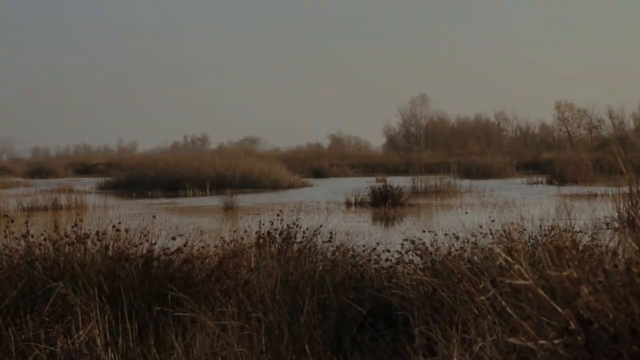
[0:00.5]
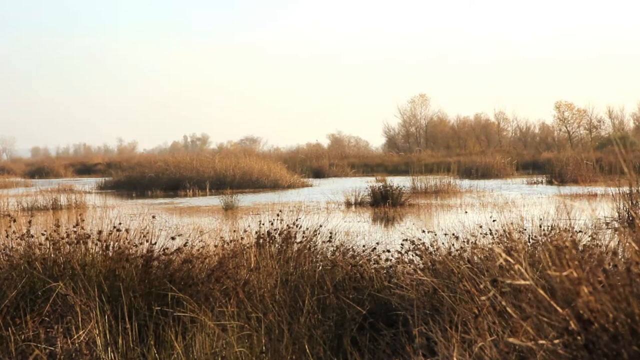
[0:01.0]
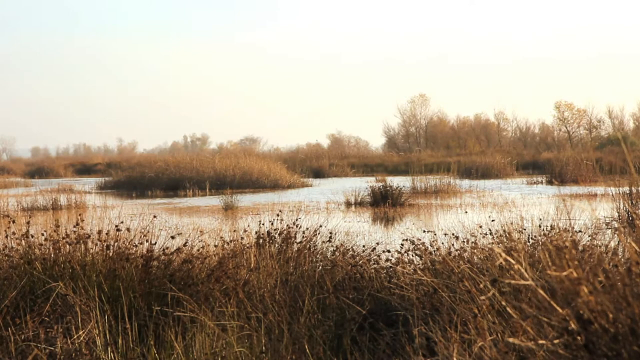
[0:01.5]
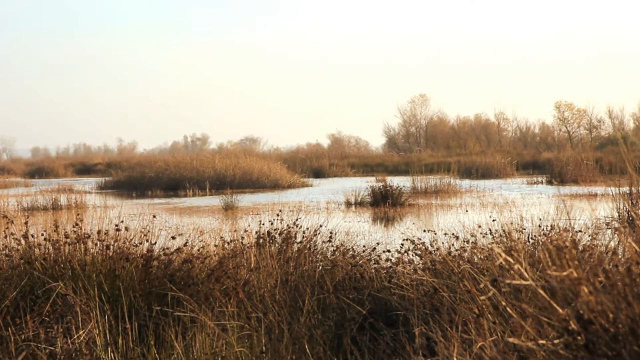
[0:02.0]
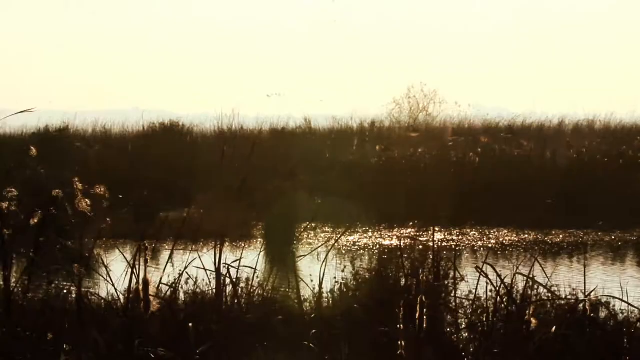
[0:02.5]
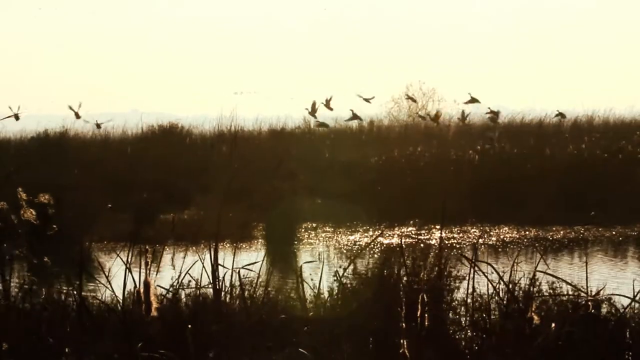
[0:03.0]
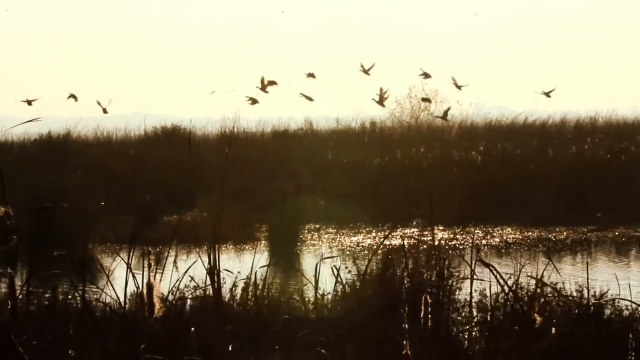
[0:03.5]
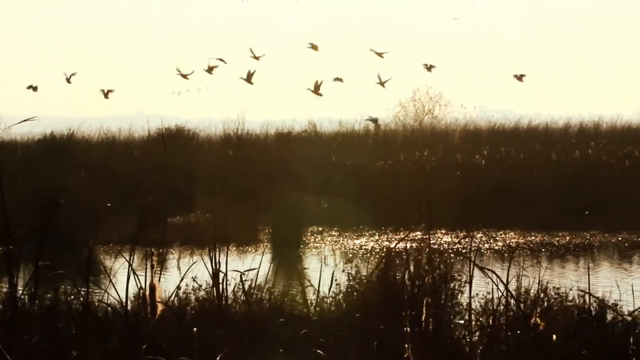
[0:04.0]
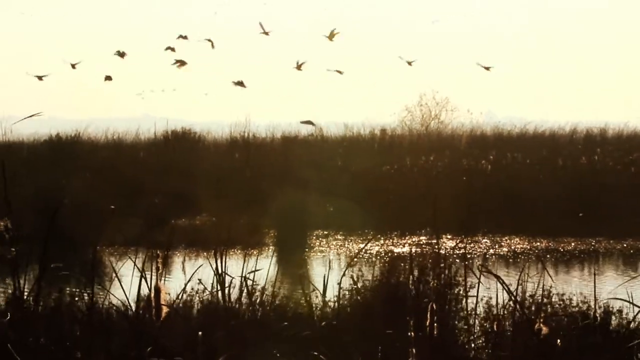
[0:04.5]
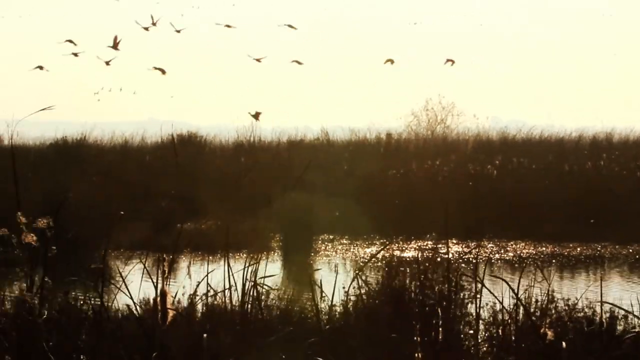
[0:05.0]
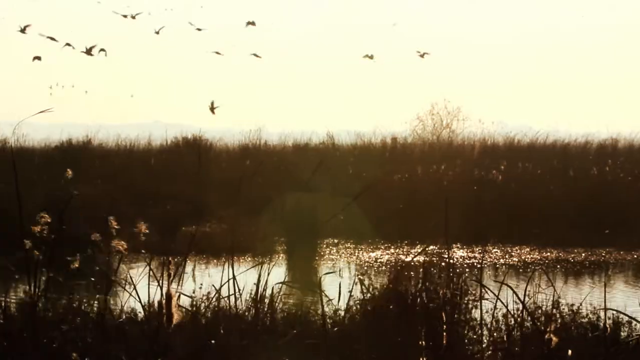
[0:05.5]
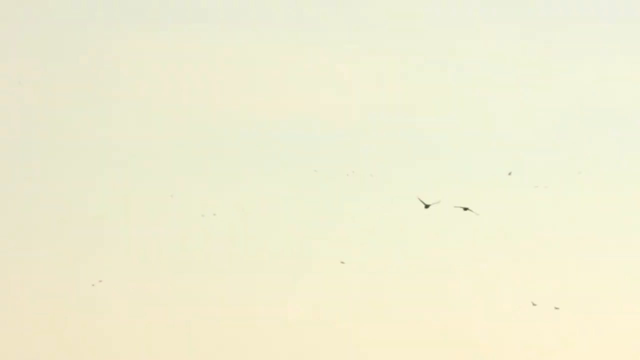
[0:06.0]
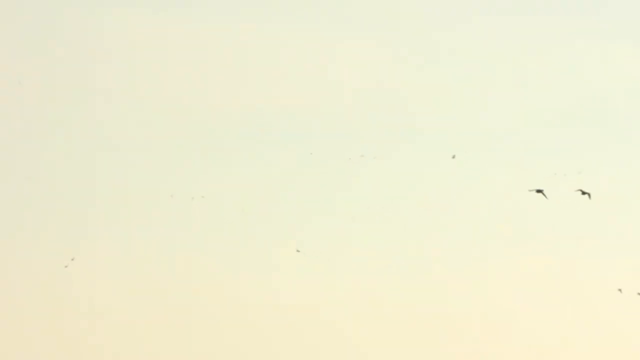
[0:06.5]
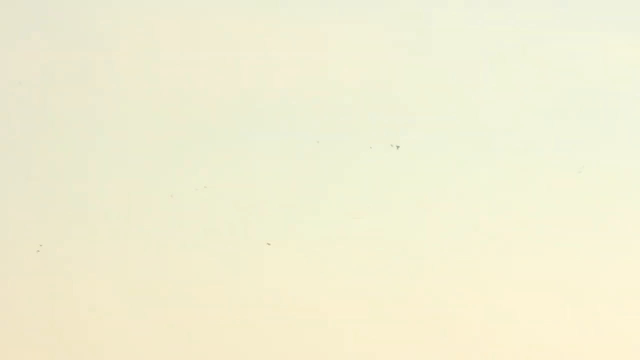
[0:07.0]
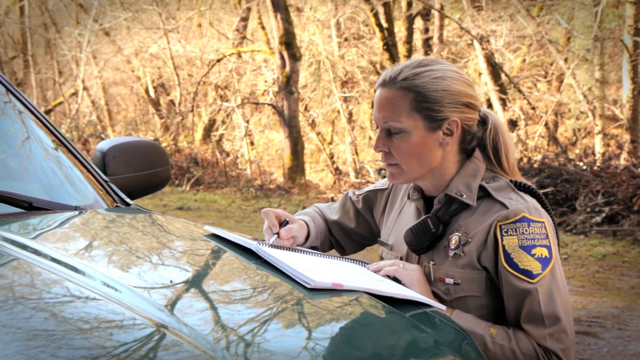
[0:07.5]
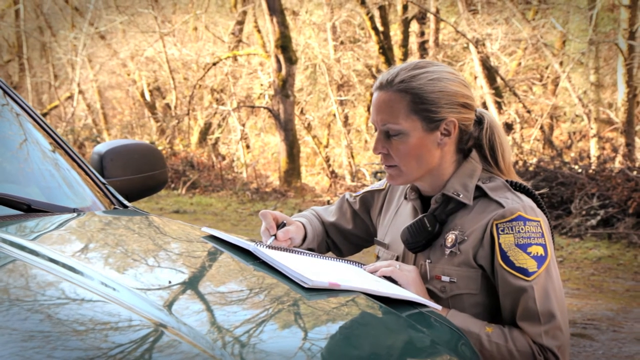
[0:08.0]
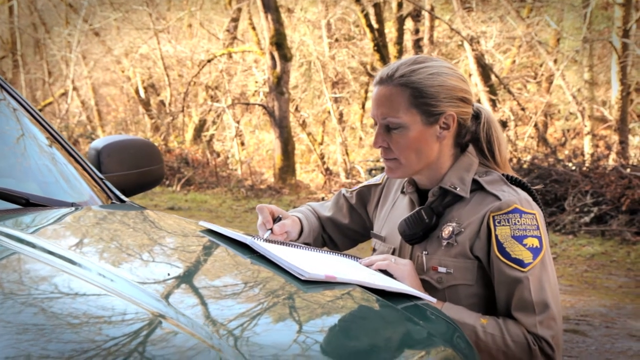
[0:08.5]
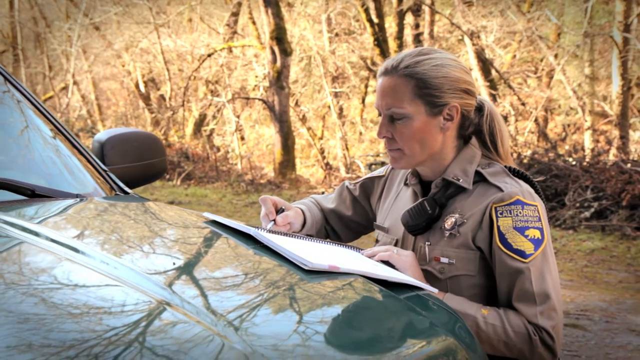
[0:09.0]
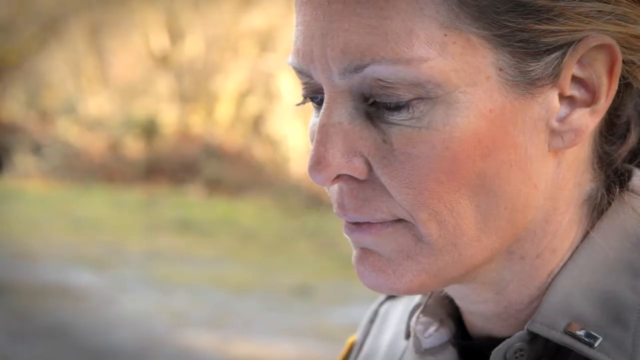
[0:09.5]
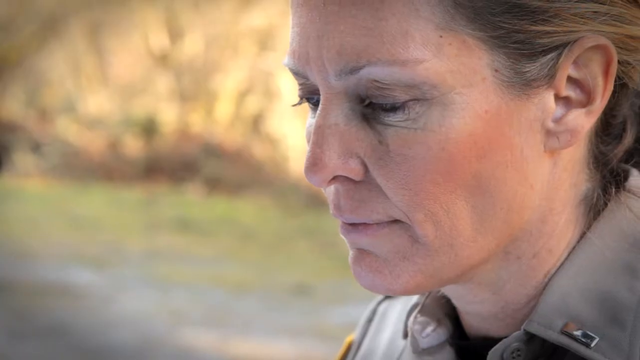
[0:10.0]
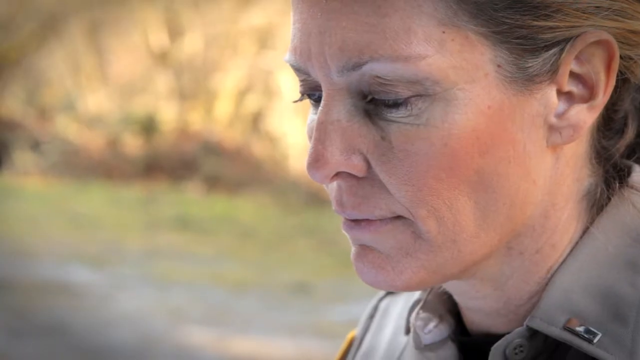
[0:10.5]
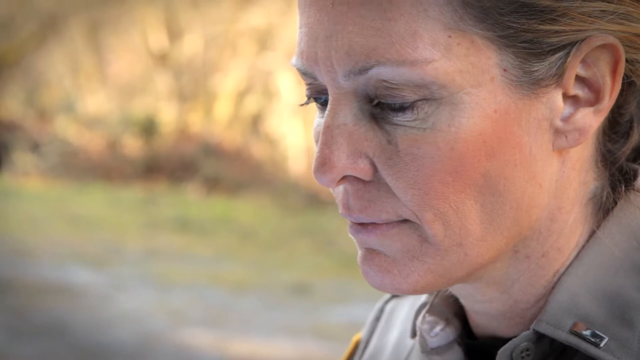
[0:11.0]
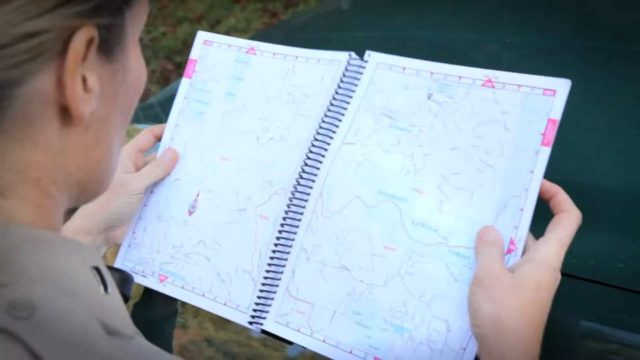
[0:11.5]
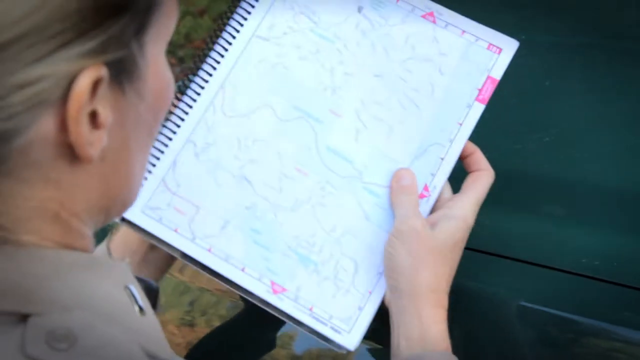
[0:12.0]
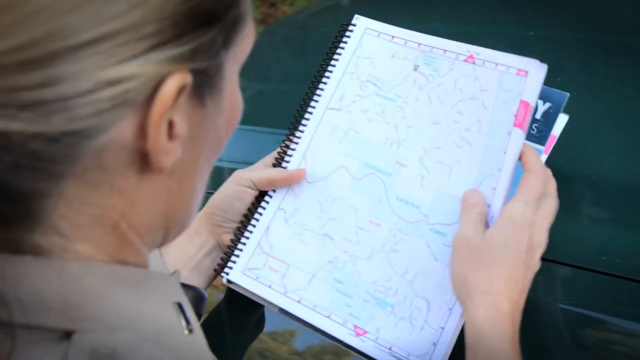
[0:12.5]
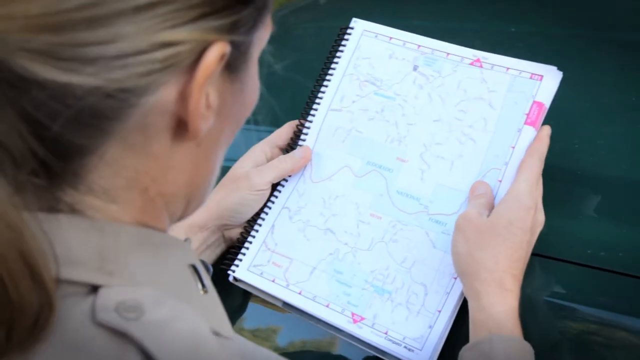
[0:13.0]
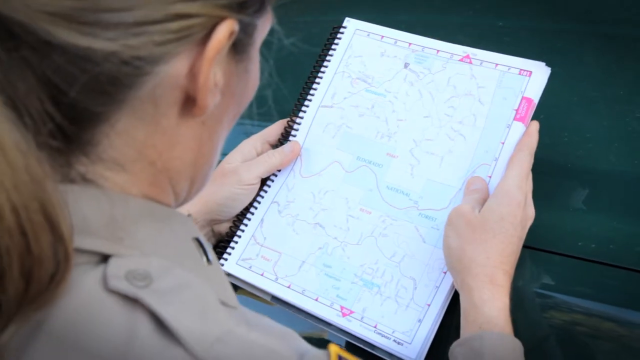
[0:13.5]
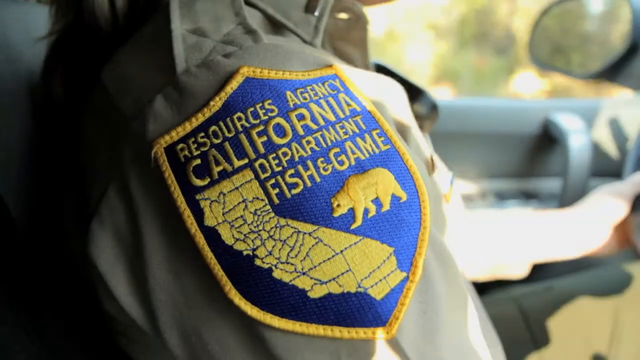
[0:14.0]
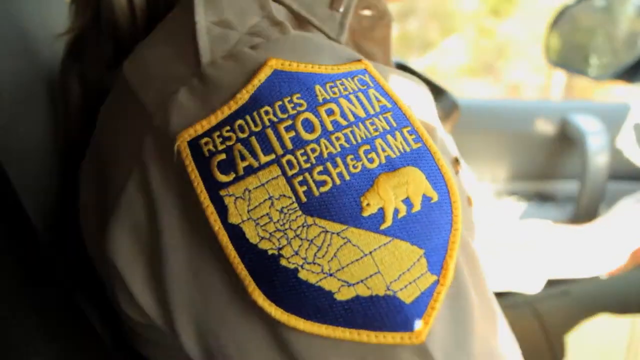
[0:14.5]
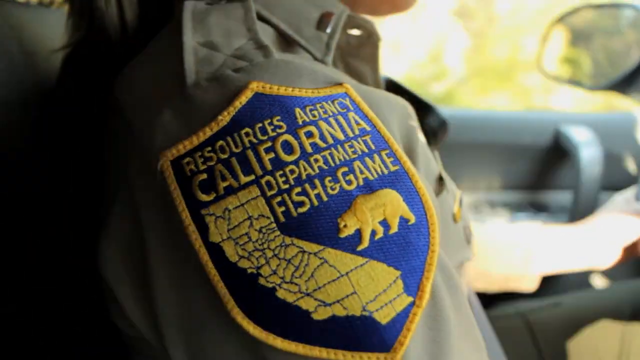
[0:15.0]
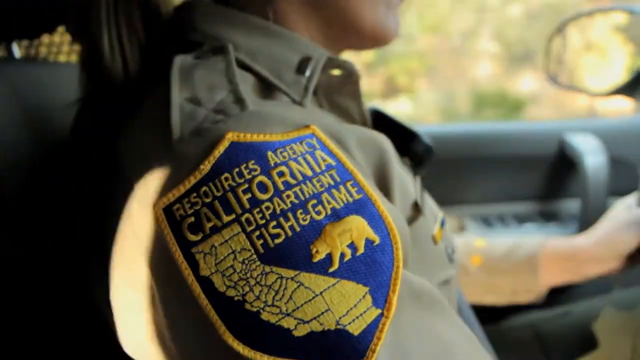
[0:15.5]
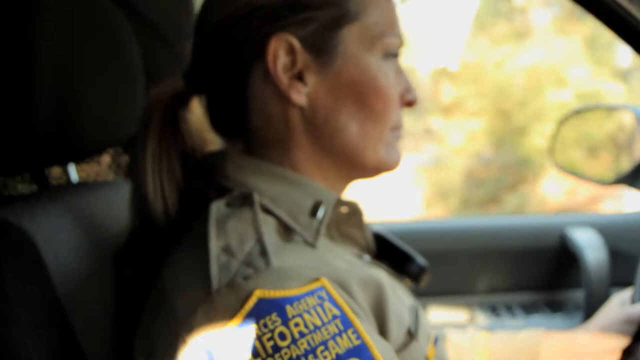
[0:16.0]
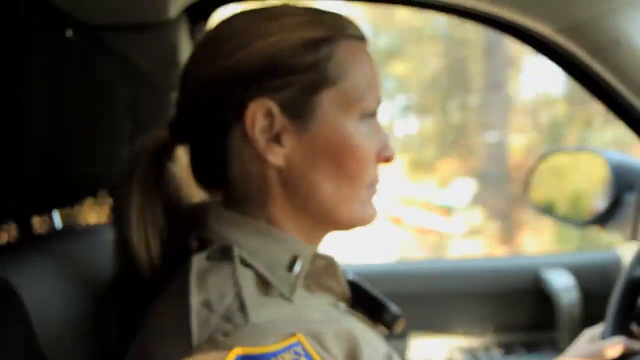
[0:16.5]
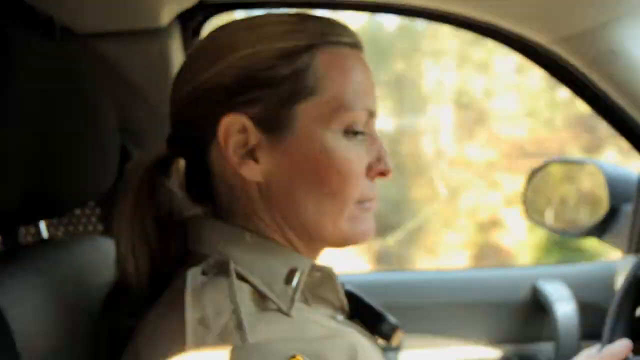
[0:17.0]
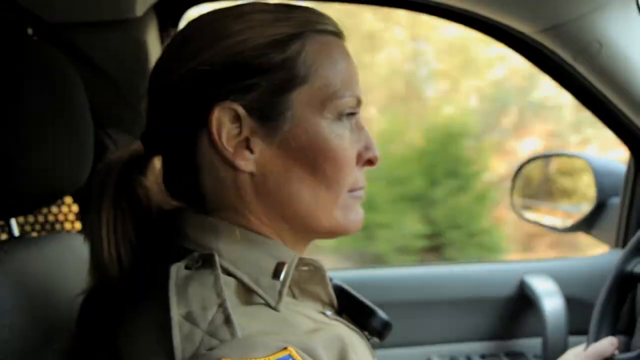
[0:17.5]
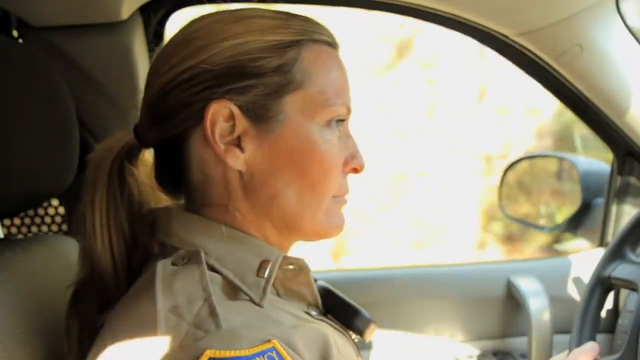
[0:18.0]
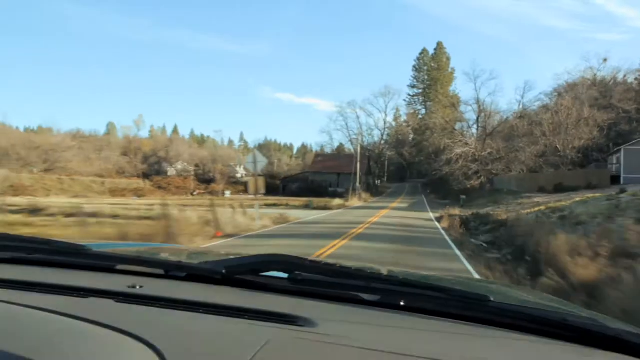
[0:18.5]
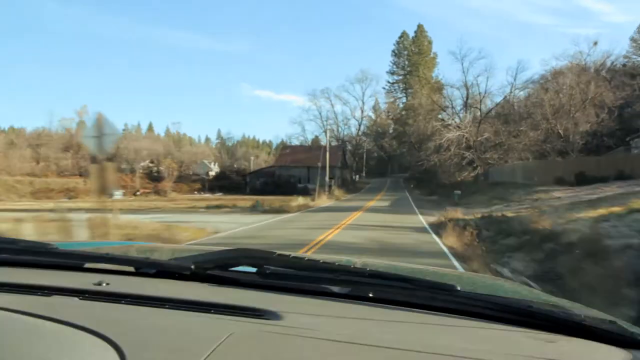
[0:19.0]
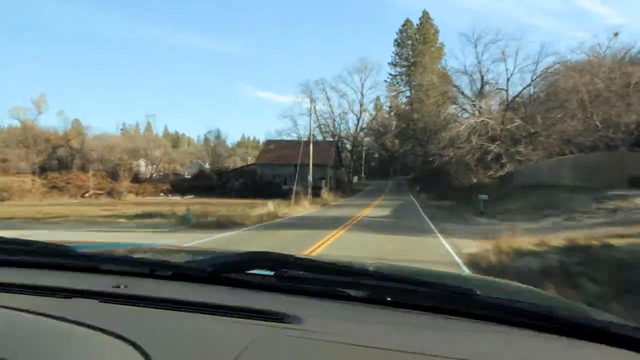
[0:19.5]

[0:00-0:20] A pond or wetland area has small islands of long, tan grass scattered throughout. In front of and behind the small body of water are more long tan grasses and large trees with few leaves. Some of the long strands of grass move slightly in the wind. A group of birds flies across the landscape, their wings flapping up and down against the bright sky. Next, a woman writes in a notebook, leaning it on the hood of a vehicle. She has long blonde hair tied into a ponytail and a badge on her shirt. A patch on her uniform has an outline of the state of California and a bear. From a different angle, the inside of the notebook shows a page with a map. A closer, zoomed-in view of the patch on her uniform shows that it reads "Resources Agency, California Department Fish & Game."